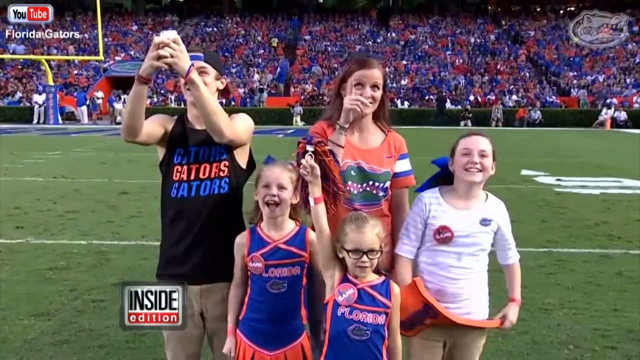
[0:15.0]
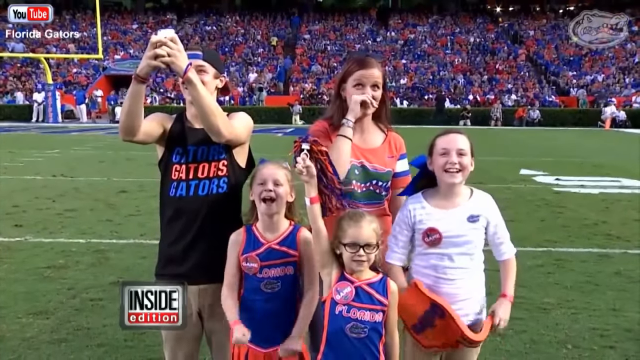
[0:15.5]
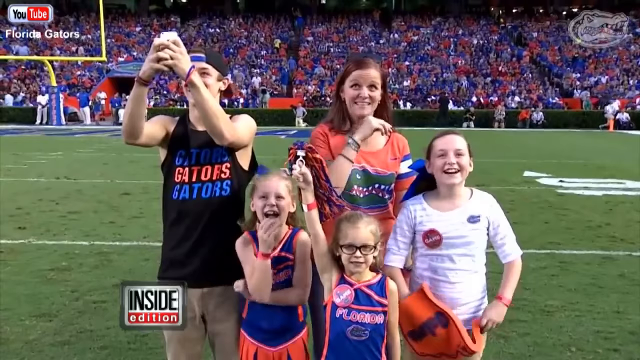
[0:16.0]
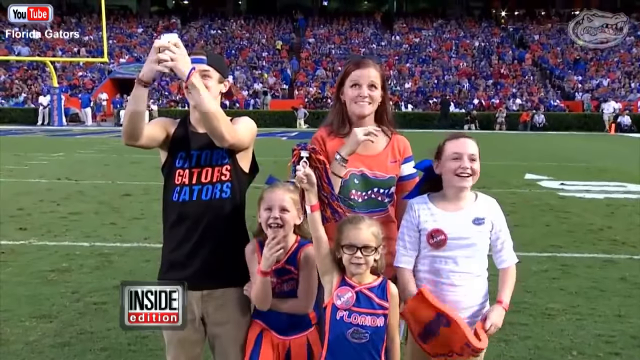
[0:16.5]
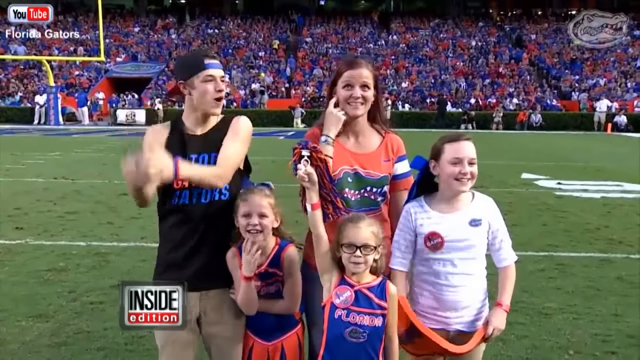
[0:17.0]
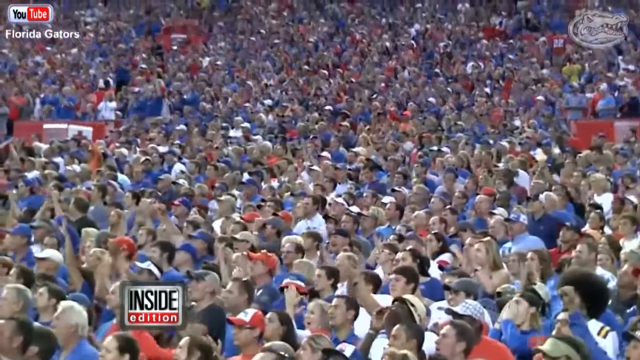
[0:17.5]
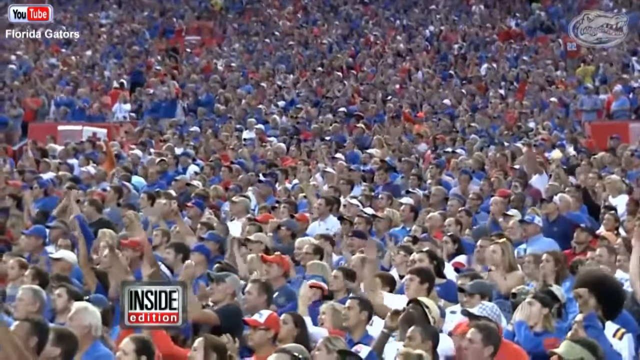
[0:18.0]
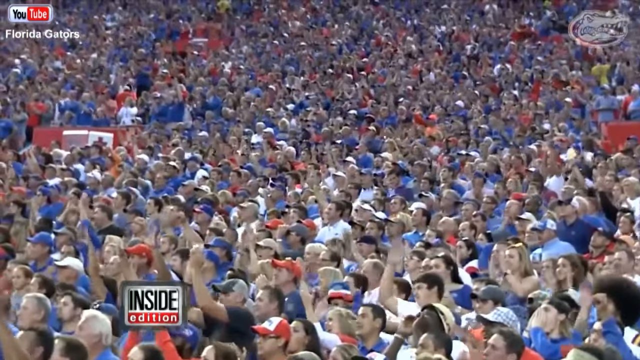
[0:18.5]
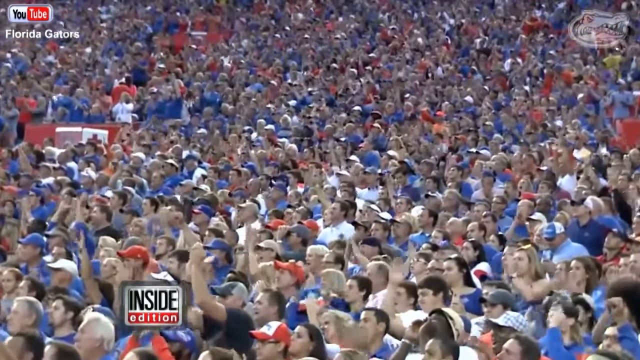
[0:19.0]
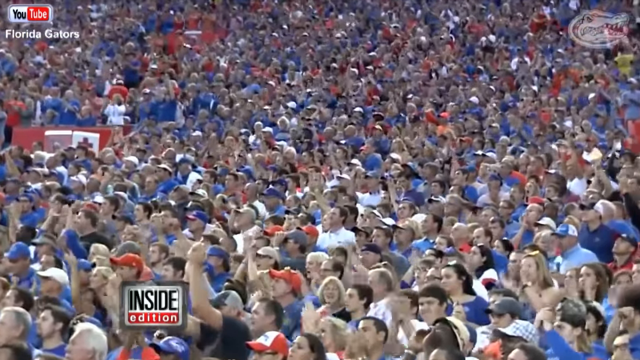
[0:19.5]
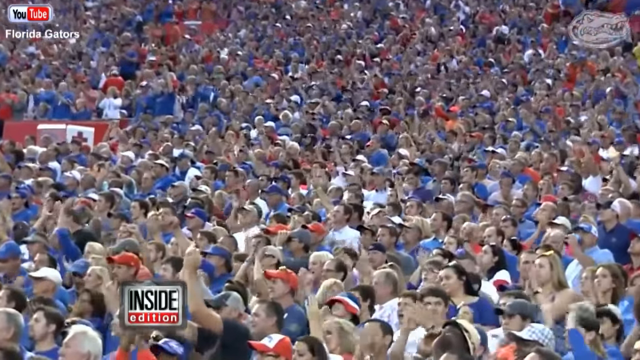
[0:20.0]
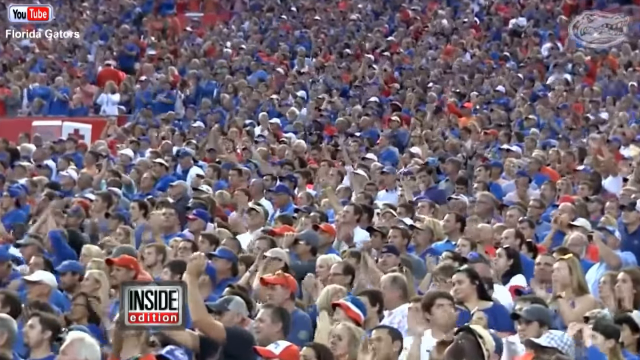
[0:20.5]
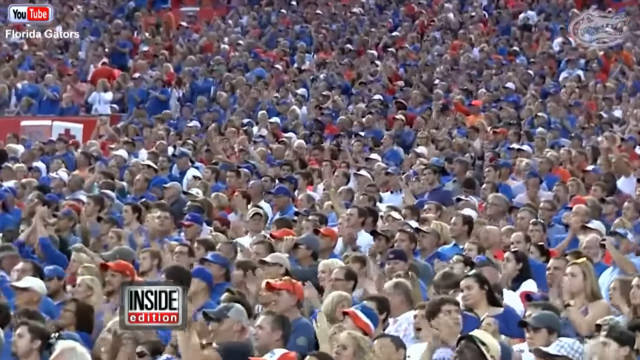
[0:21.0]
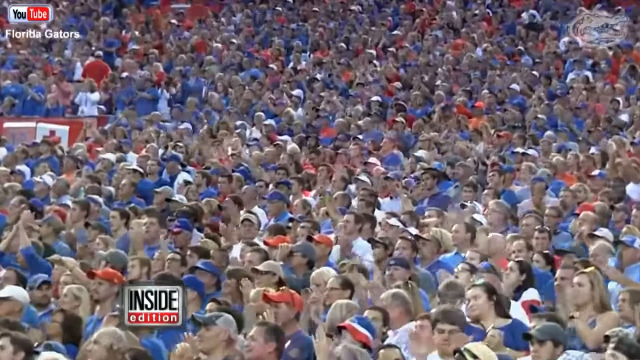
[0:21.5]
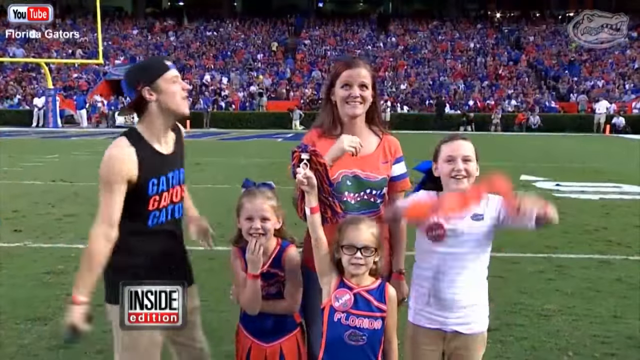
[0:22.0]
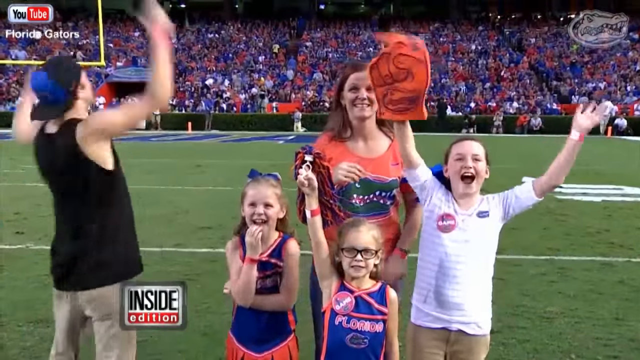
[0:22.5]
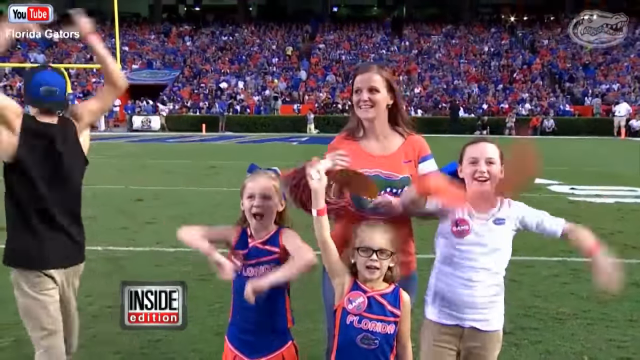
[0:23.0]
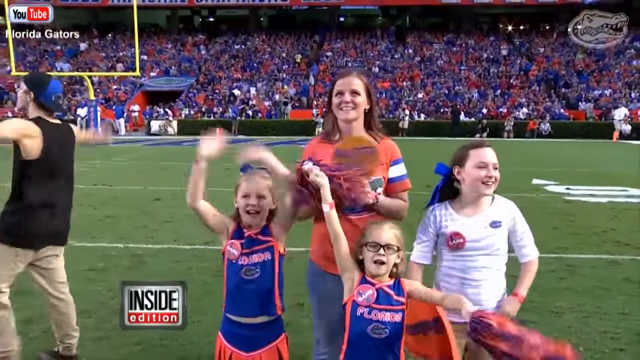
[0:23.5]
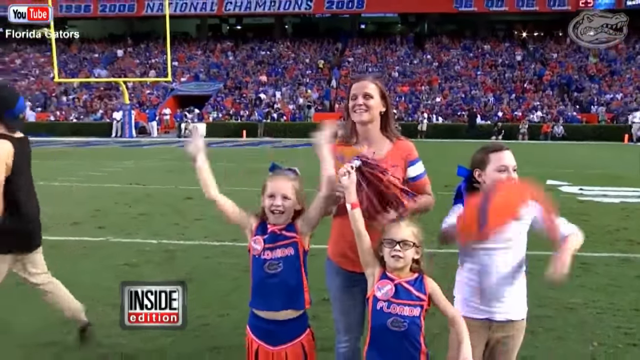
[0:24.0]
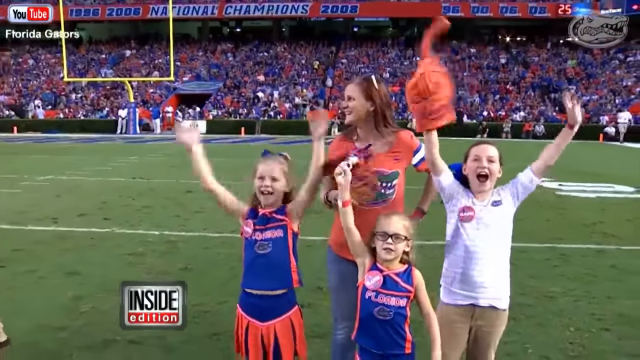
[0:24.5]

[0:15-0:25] The family stands on the field, and a man appears to announce or introduce them, hyping up the crowd and waving his arms. There is a quick cutaway to the crowd of Florida Gators fans cheering as the family is introduced. The two littlest girls wave, while the older daughter waves a foam finger. The mom stands there looking at the sun. The three daughters, the mom and the son stand out on the field as the crowd is apparently hyped up, either at the start or the end of the game.